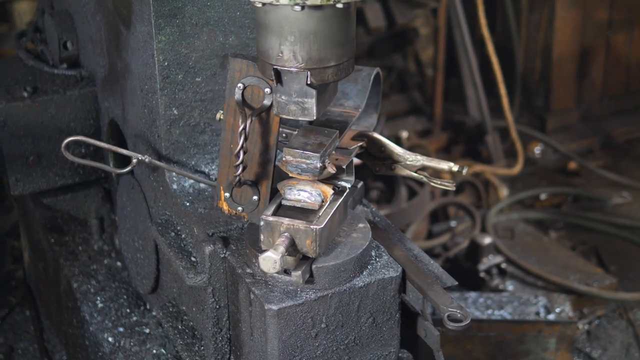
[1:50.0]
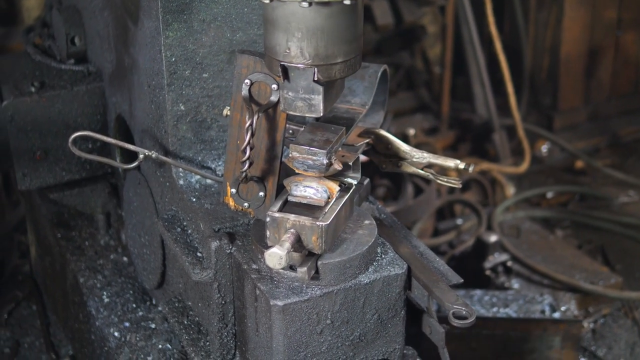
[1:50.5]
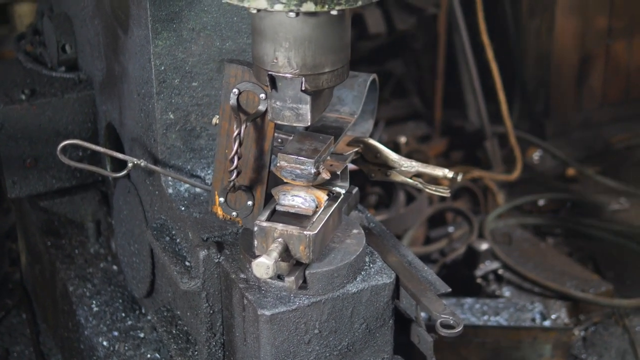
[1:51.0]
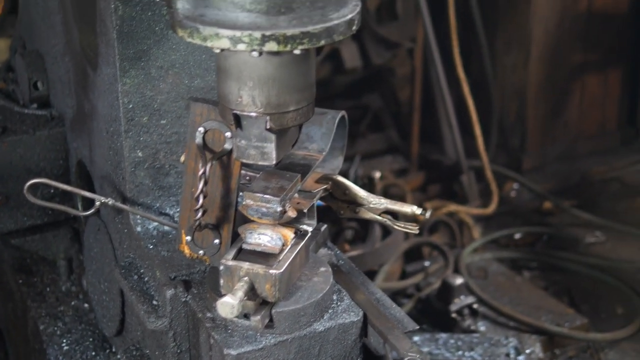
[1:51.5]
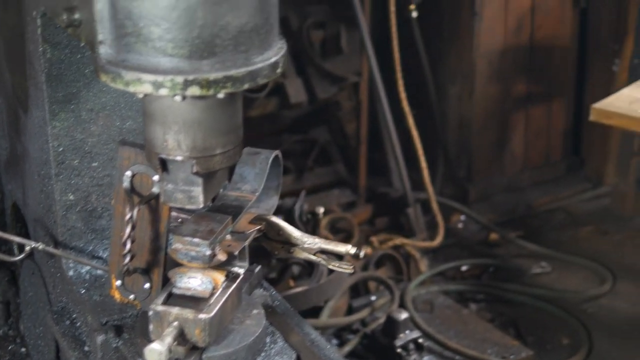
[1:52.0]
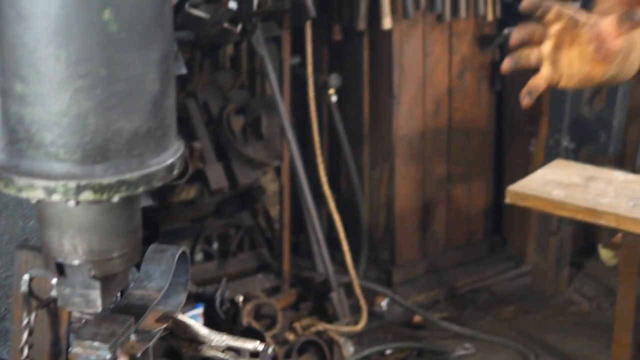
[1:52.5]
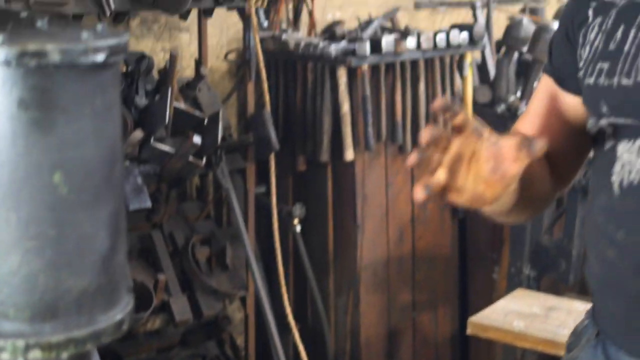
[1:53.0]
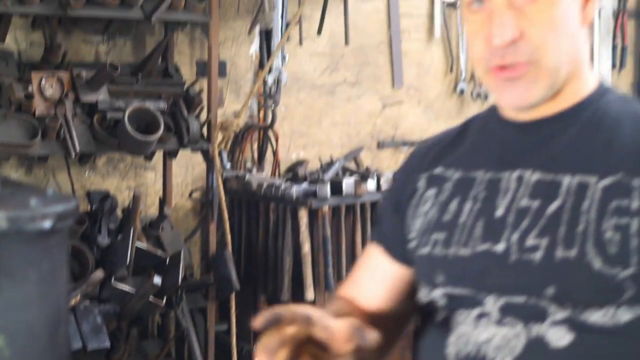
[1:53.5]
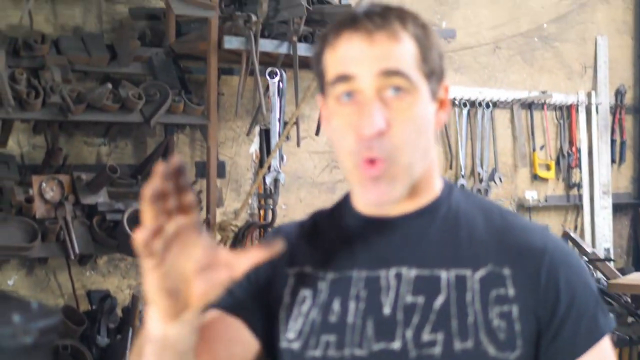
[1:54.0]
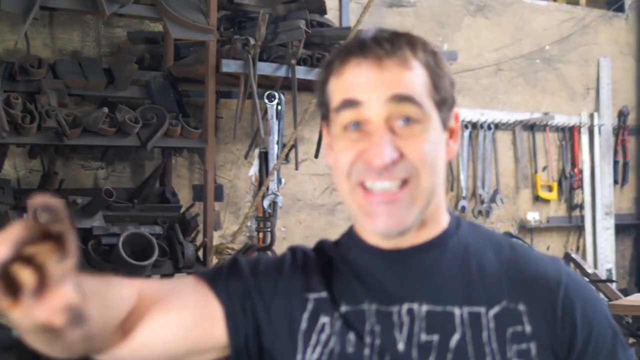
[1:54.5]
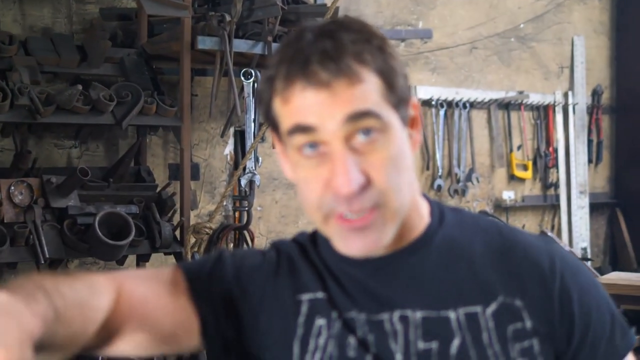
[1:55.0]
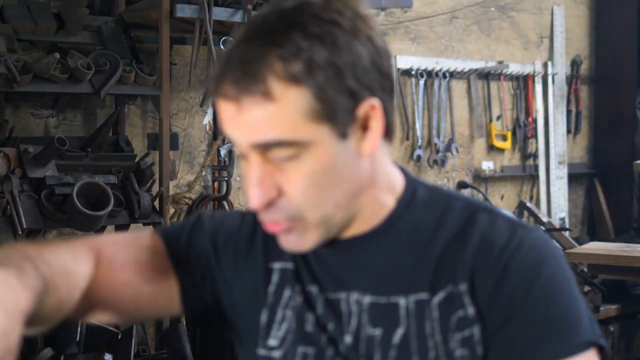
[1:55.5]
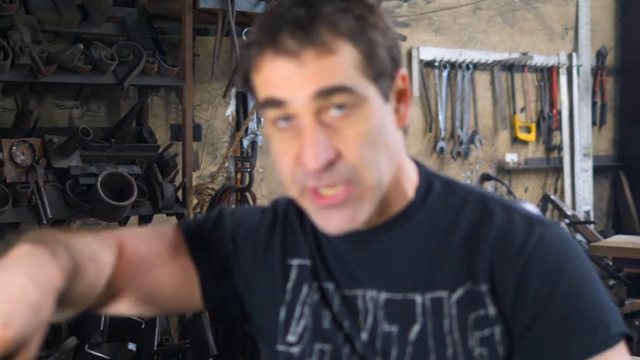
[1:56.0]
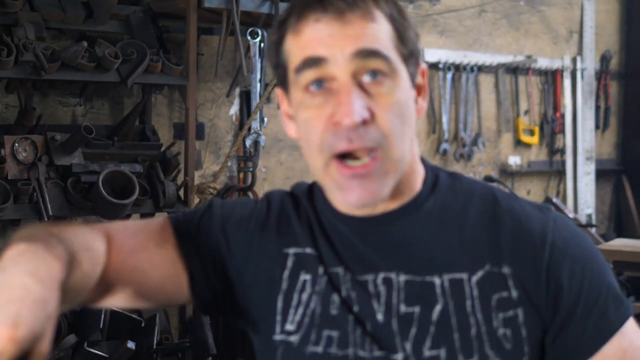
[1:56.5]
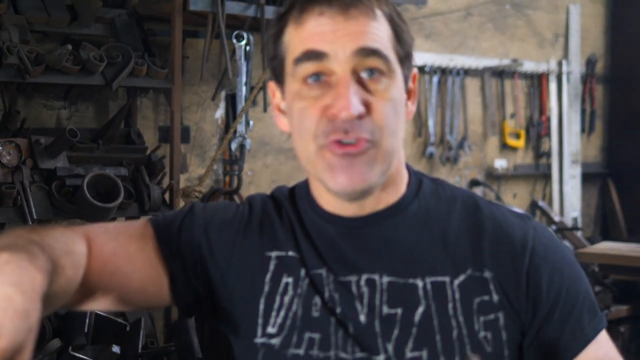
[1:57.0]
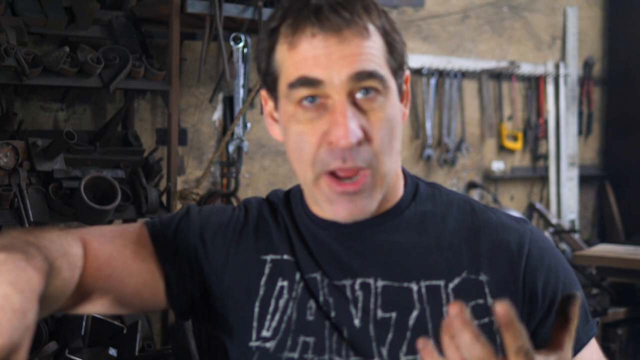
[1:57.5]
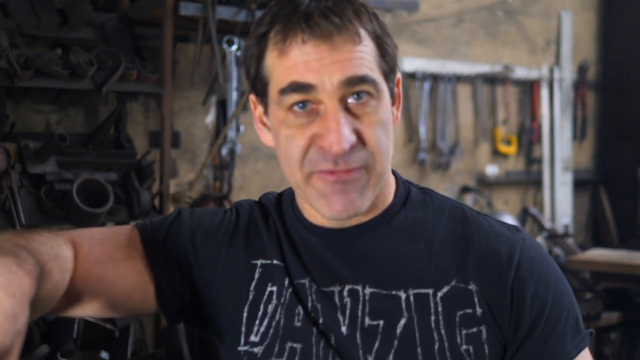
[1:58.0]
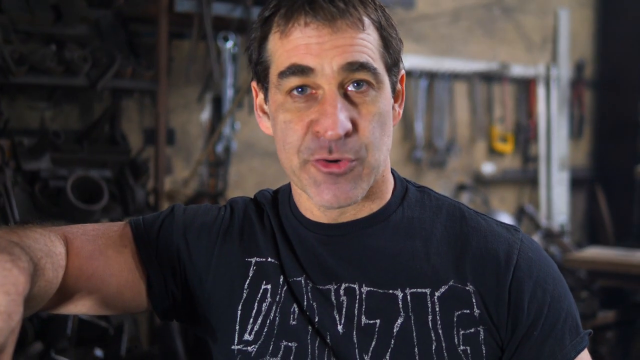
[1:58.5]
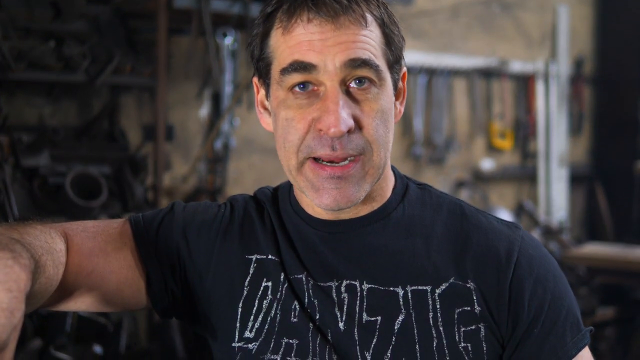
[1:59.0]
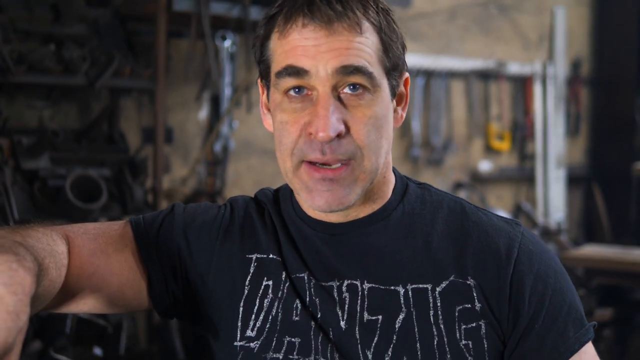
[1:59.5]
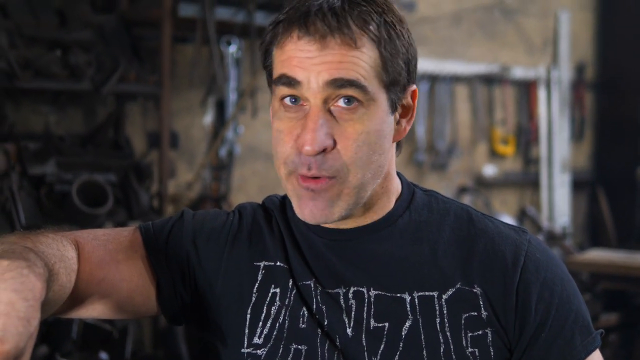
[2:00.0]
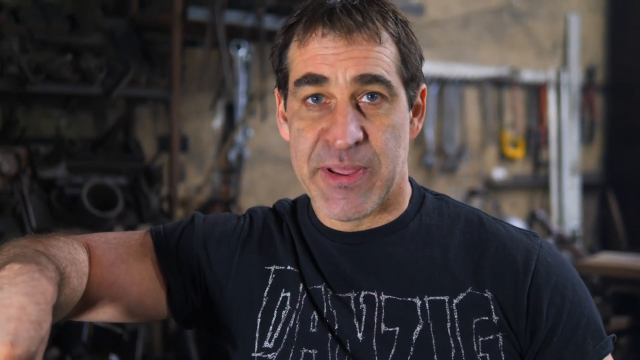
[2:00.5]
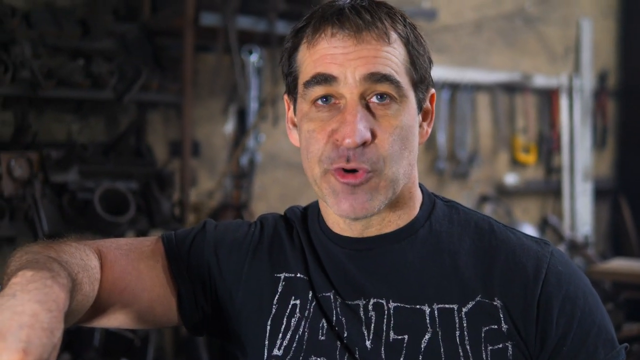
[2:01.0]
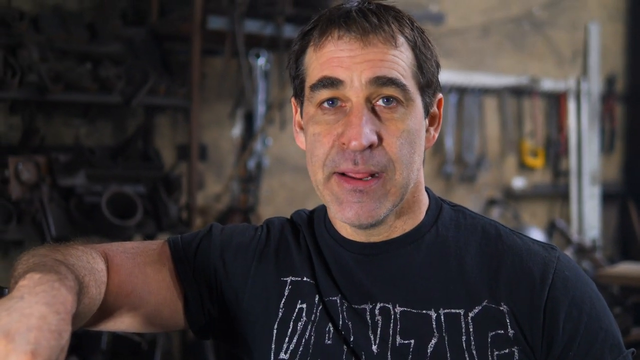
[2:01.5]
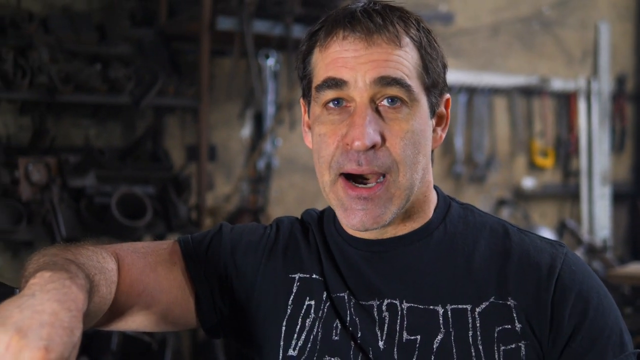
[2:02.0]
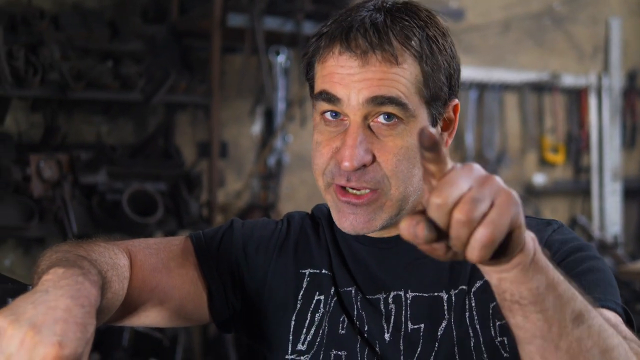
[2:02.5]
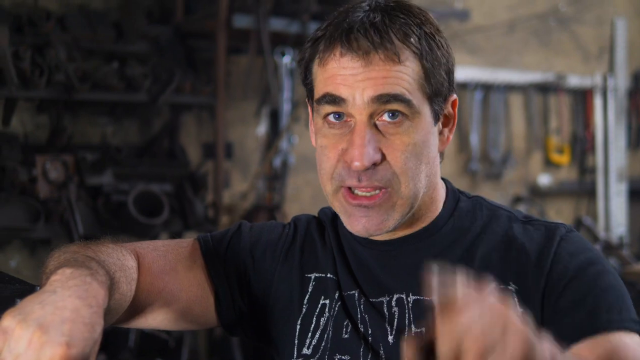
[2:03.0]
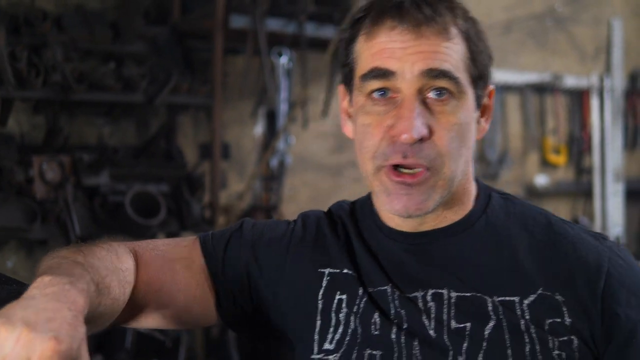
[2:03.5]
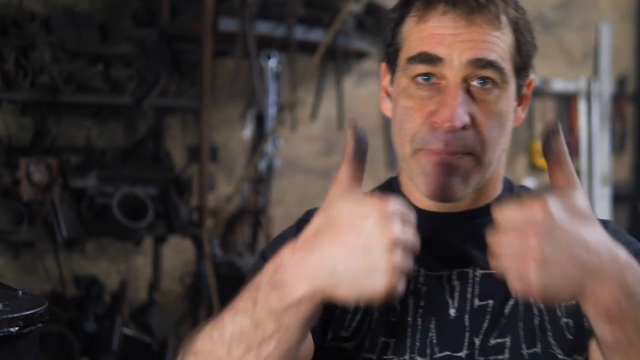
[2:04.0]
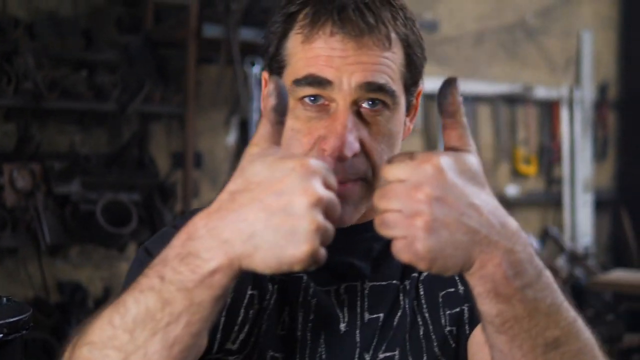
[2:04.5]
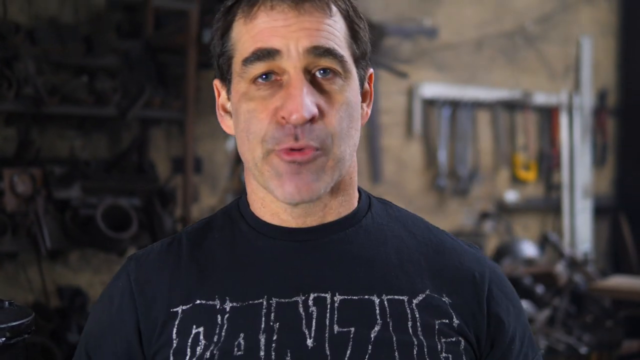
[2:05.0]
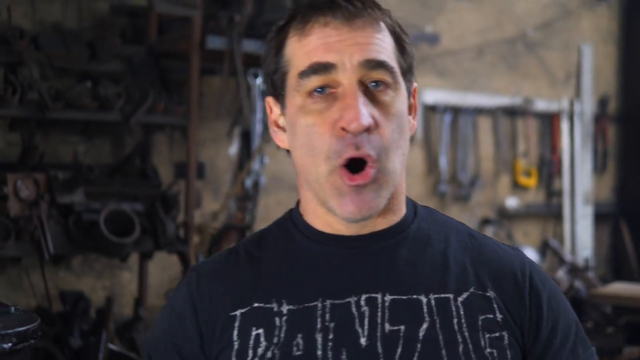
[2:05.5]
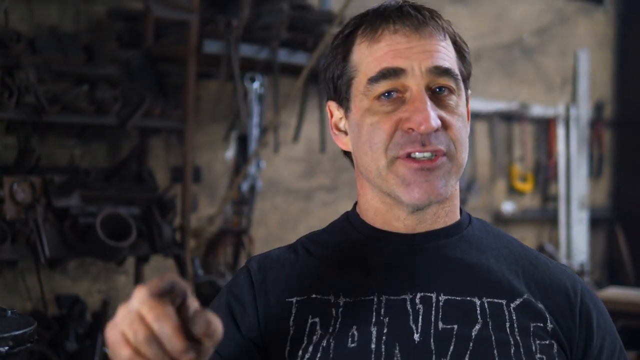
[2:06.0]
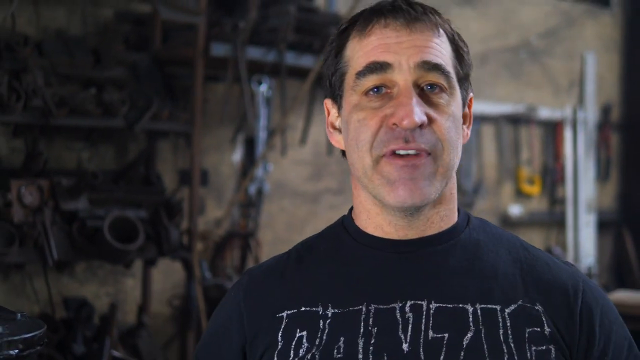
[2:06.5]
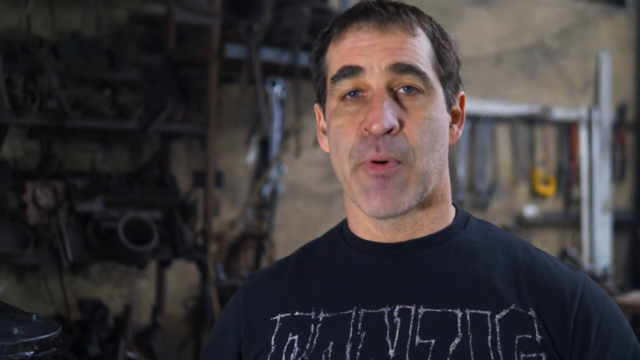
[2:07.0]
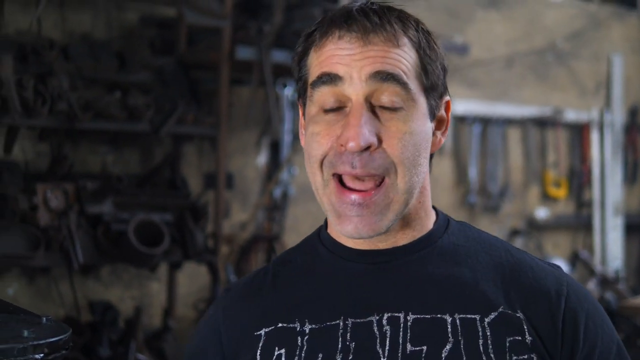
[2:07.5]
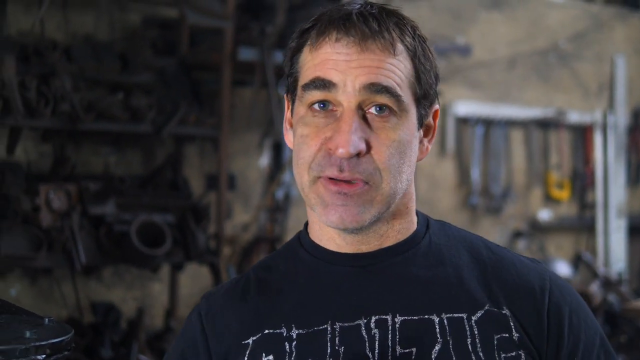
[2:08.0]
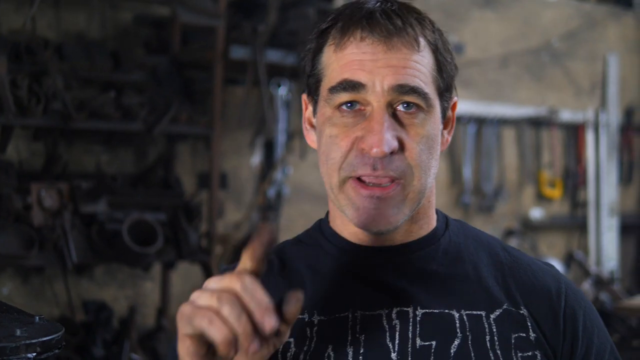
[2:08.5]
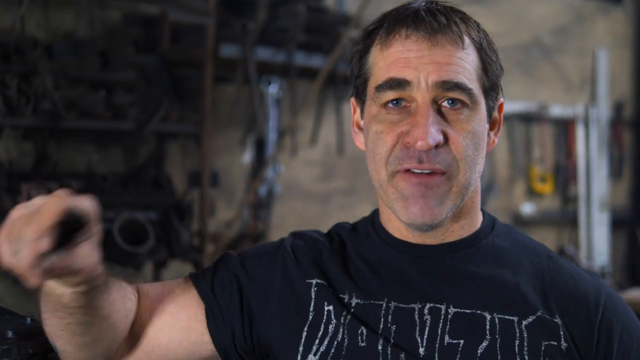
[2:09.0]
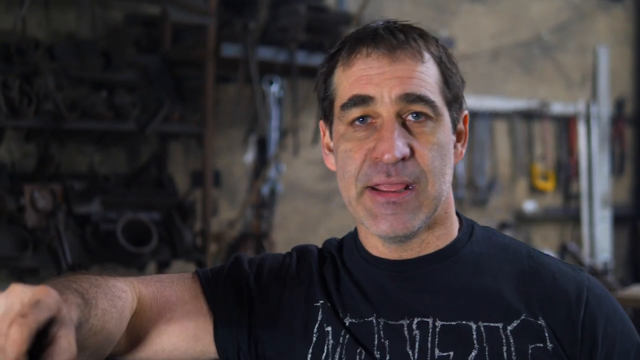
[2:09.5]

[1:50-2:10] The machine into which the man inserted the pieces is shown, and then the camera focuses on him as he talks, points at the camera and gives a thumbs up. Lots of tools are behind him, including wrenches, and there are tons of iron items to his right.